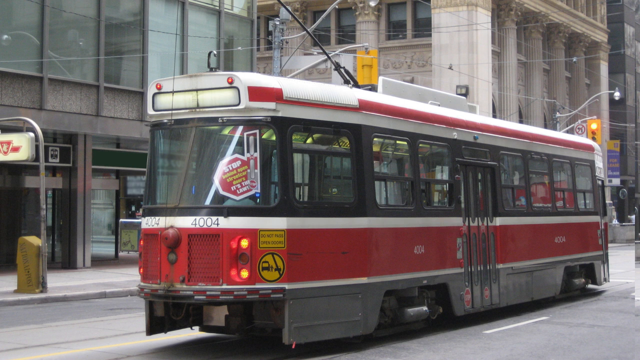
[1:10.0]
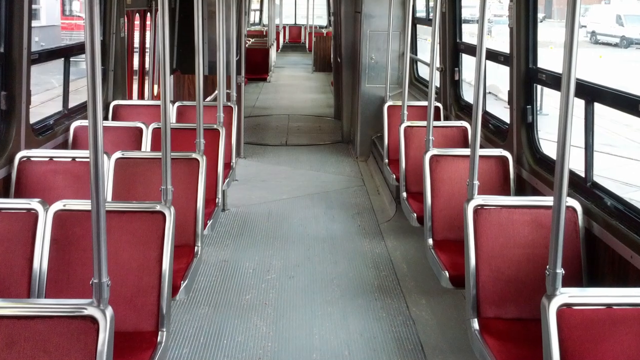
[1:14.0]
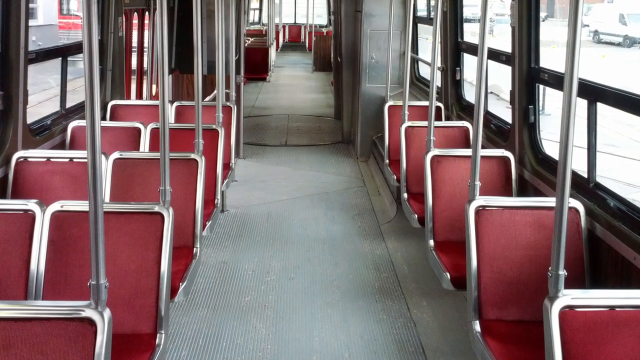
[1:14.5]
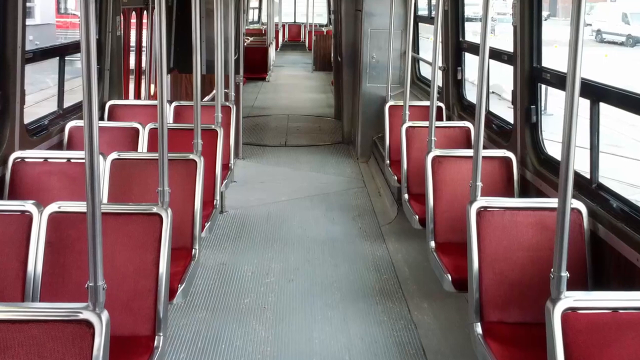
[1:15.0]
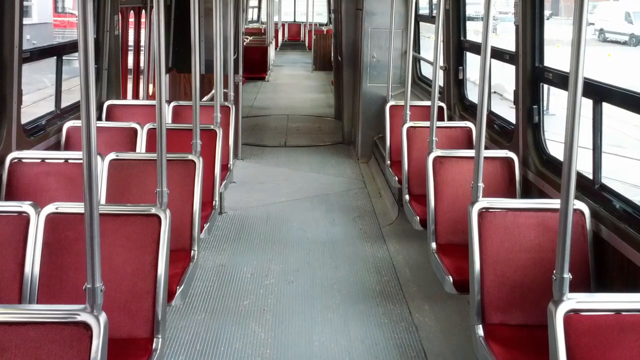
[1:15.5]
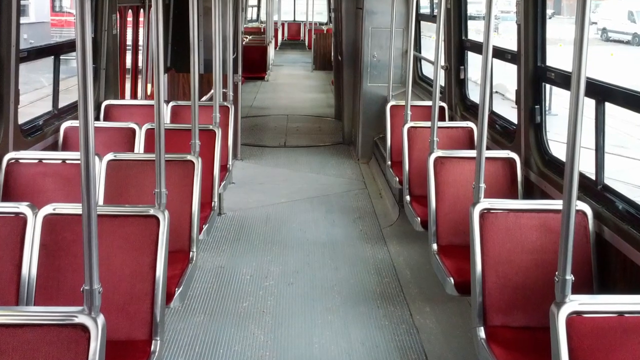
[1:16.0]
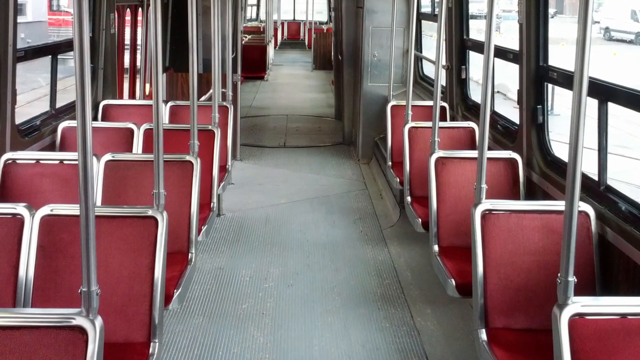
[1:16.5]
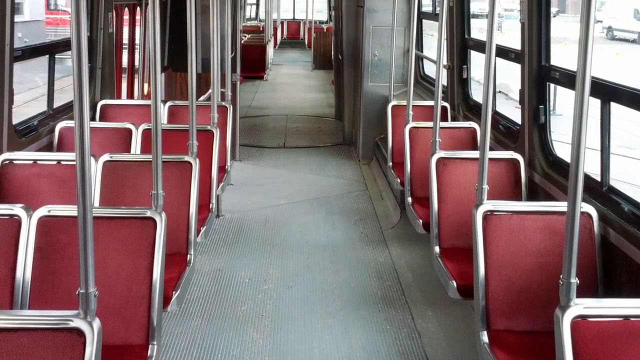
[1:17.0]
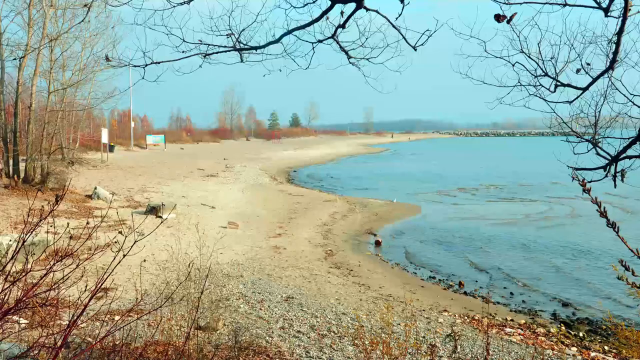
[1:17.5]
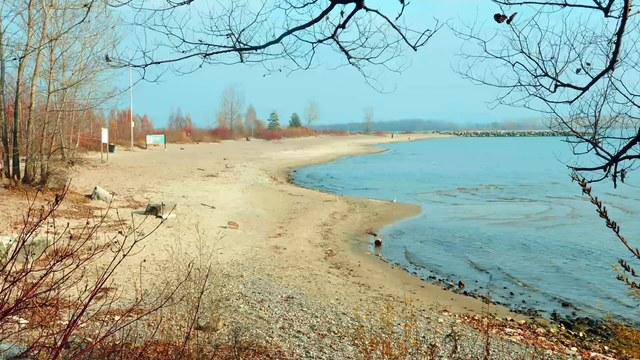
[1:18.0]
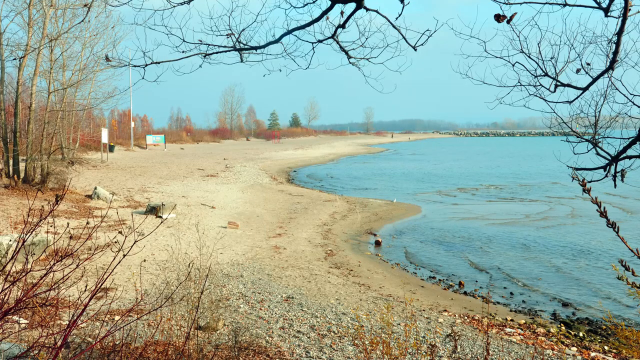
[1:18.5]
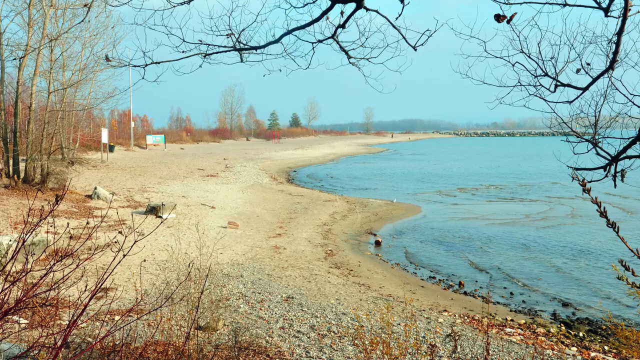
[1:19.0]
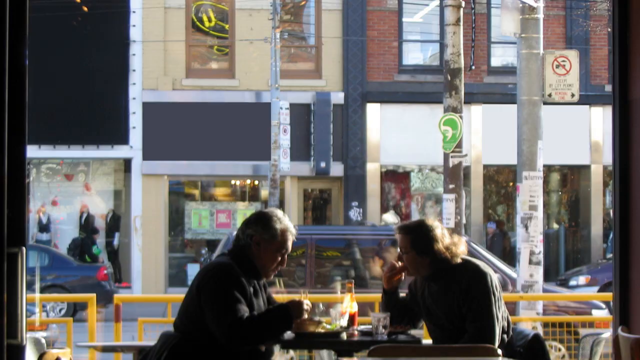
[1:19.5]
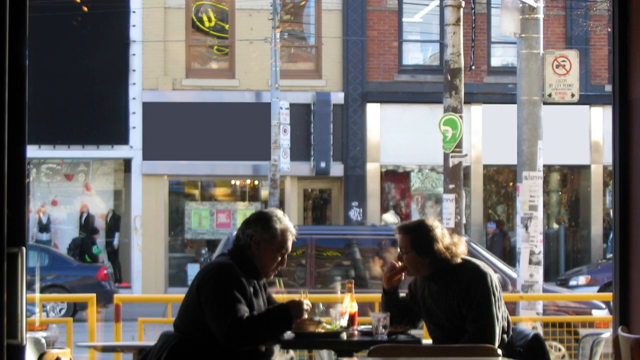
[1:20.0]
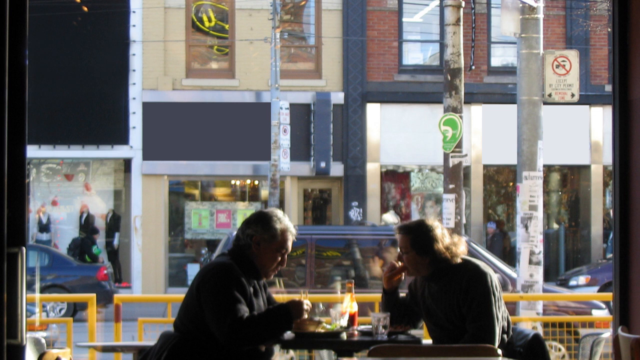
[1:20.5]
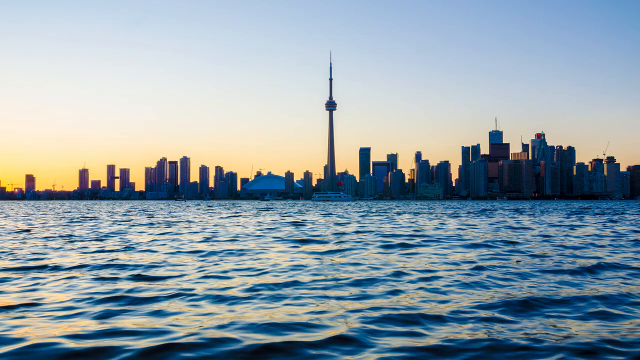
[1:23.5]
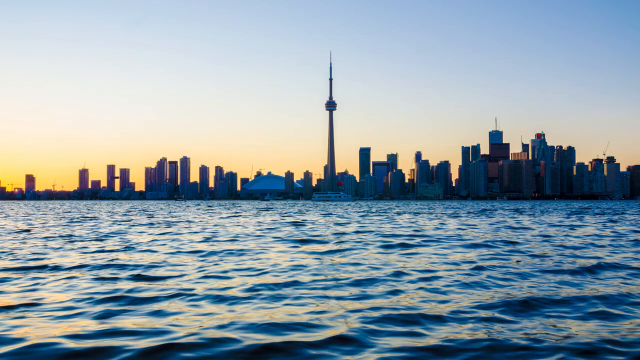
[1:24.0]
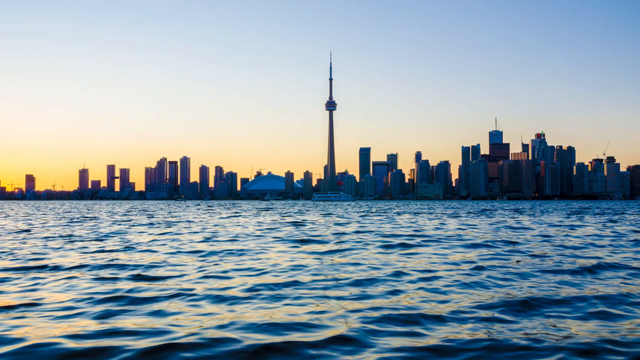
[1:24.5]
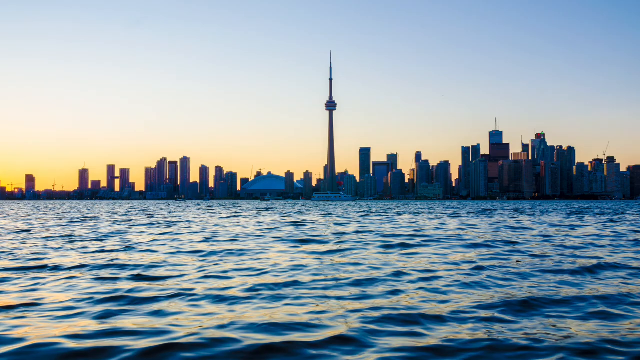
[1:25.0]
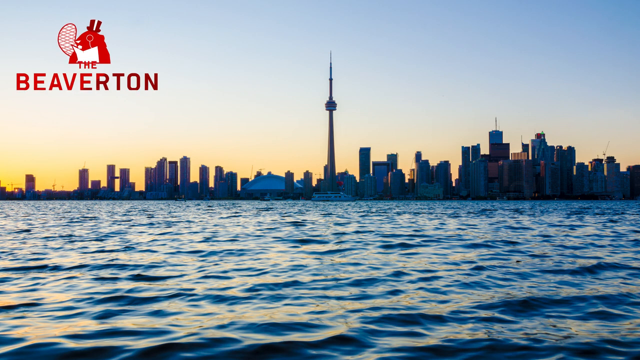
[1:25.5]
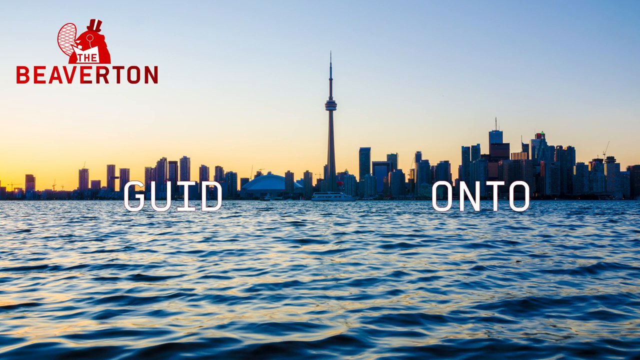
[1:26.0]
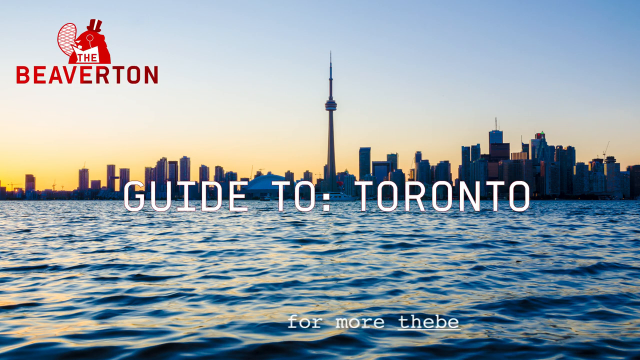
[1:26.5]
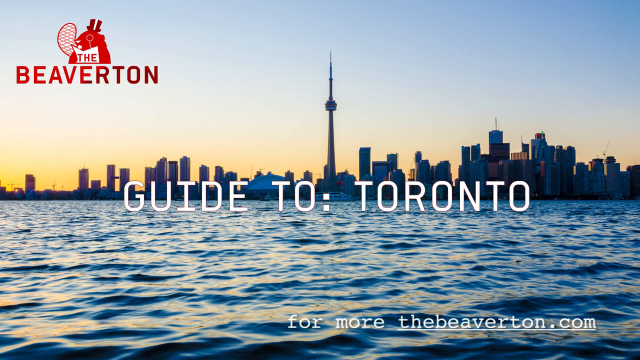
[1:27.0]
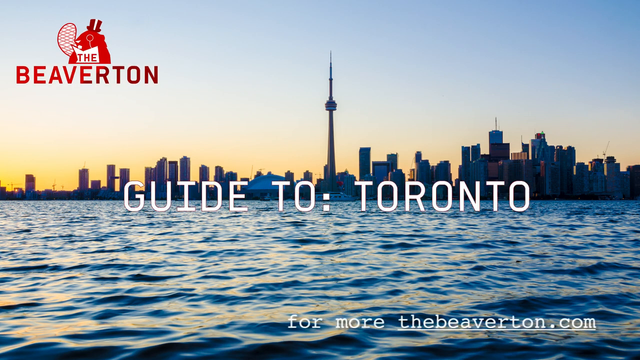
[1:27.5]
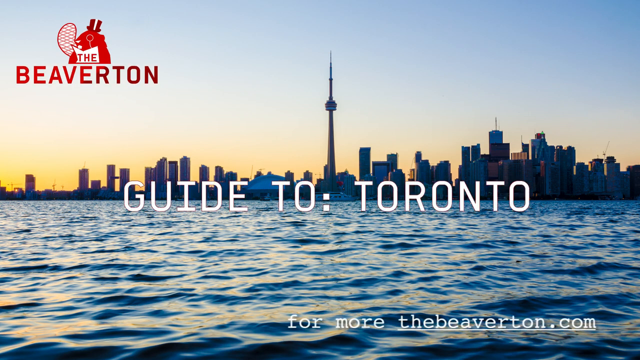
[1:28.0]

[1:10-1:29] The interior of the city bus shows red chairs in sets of two and sets of one, with silver poles extending from the chairs and windows by the chairs. The video transitions to a beach with sand by the shore. A man and a woman are in a shop, both seated; the woman is looking at the man while the man is looking at the table, and vehicles pass by outside. Then the ocean appears, with the CN Tower and other high-rise buildings in the distance. At the top left of the screen is "the Beaverton" alongside its logo, in the center "guide to Toronto" is written in white, and at the bottom right is text that says "for more, thebeaverton.com," with "thebeaverton.com" underlined. All the text is white.